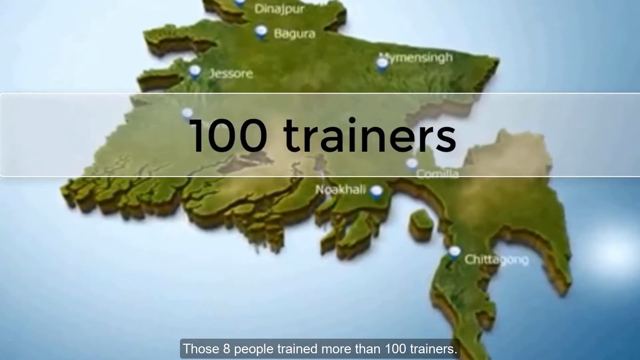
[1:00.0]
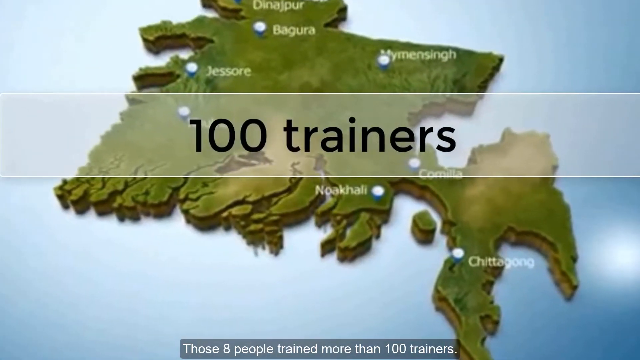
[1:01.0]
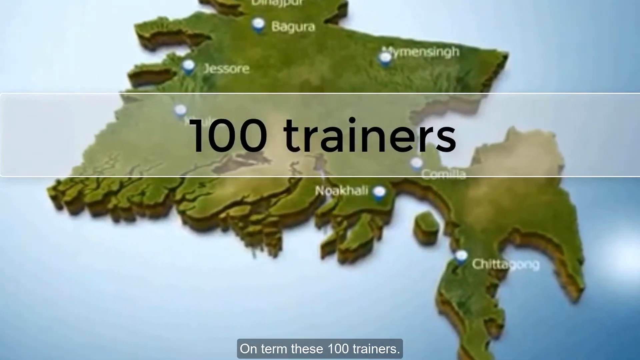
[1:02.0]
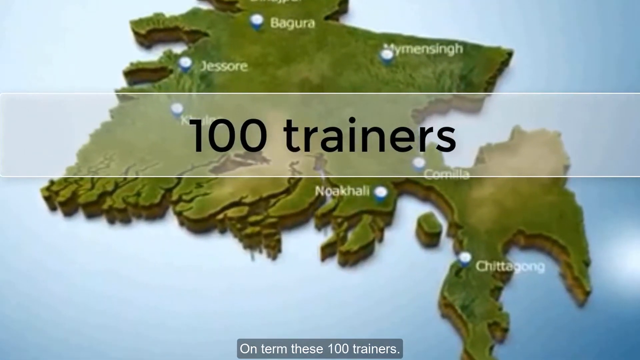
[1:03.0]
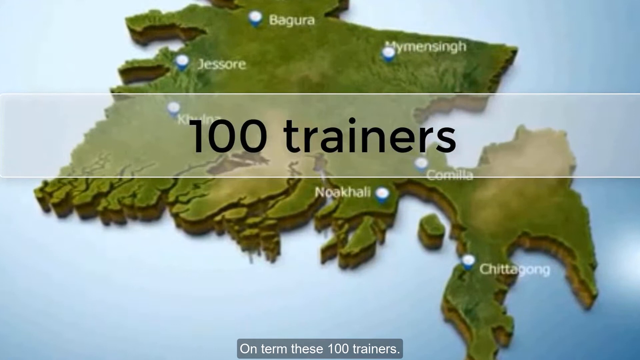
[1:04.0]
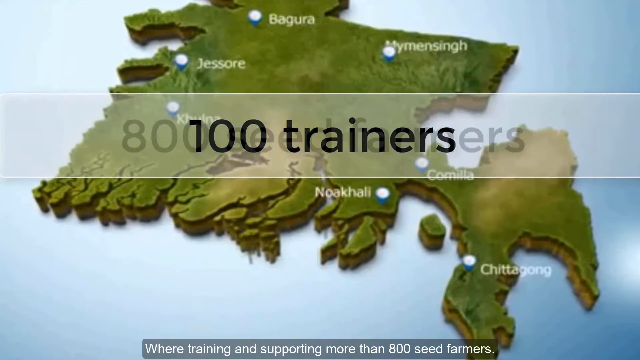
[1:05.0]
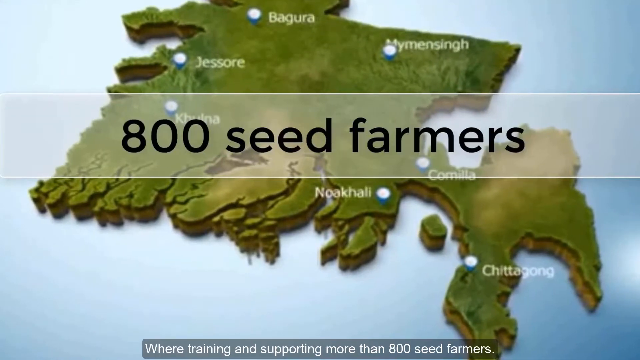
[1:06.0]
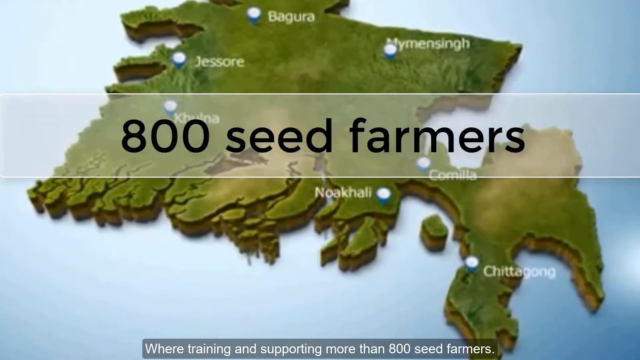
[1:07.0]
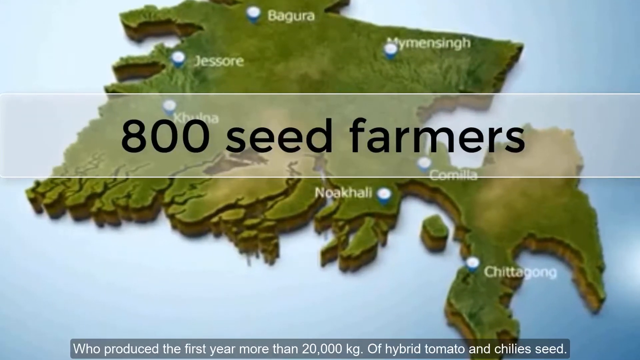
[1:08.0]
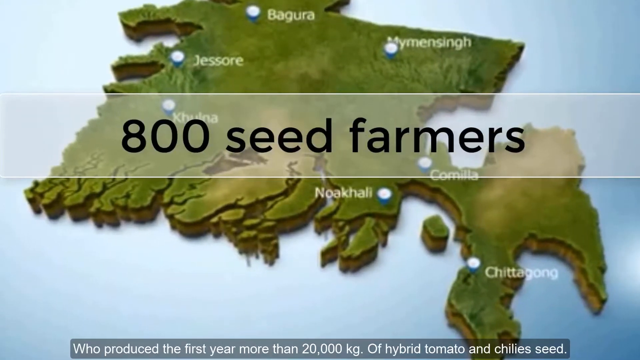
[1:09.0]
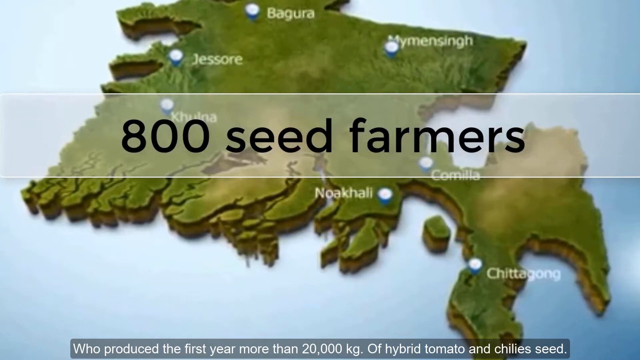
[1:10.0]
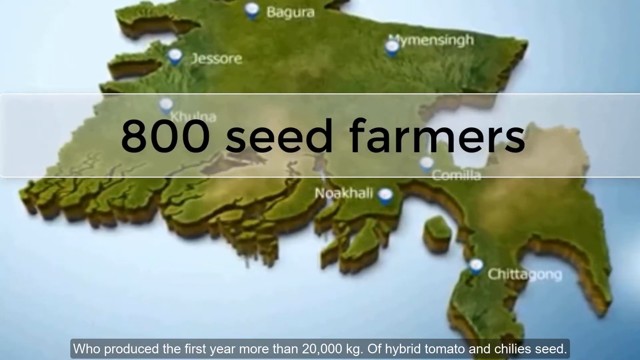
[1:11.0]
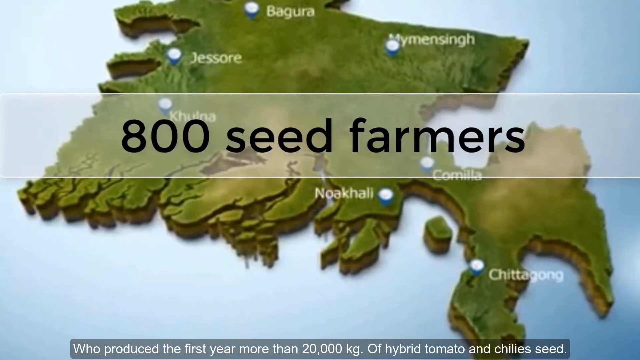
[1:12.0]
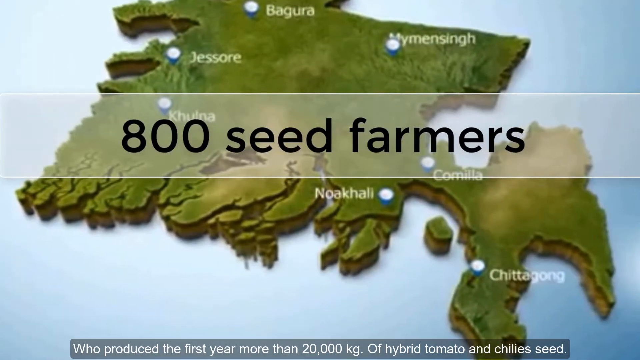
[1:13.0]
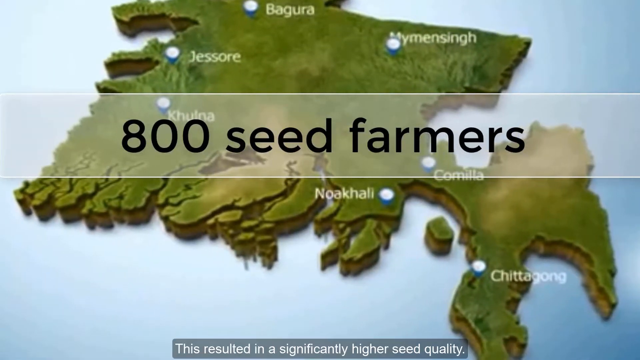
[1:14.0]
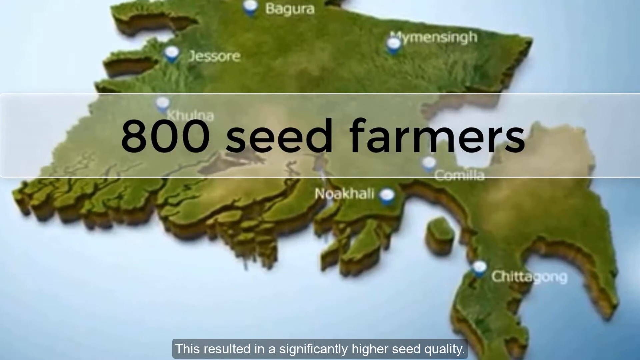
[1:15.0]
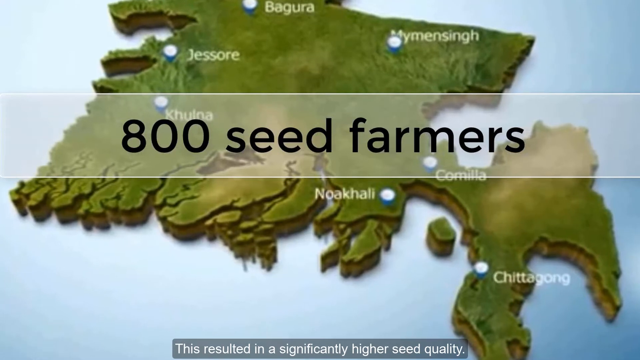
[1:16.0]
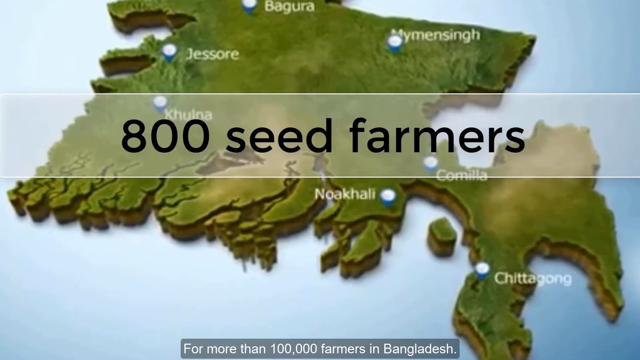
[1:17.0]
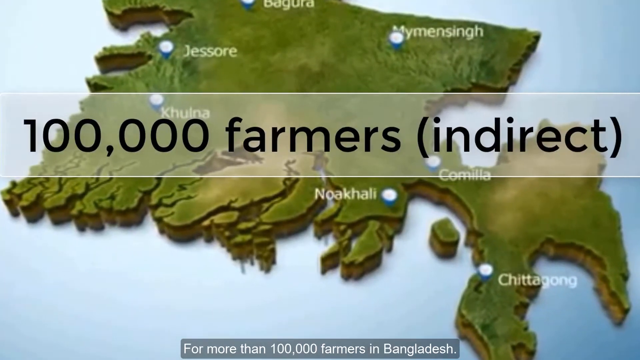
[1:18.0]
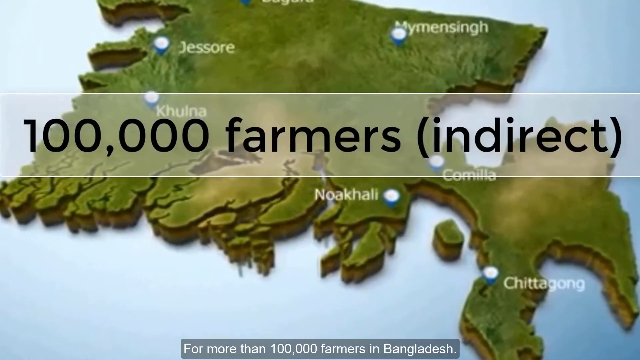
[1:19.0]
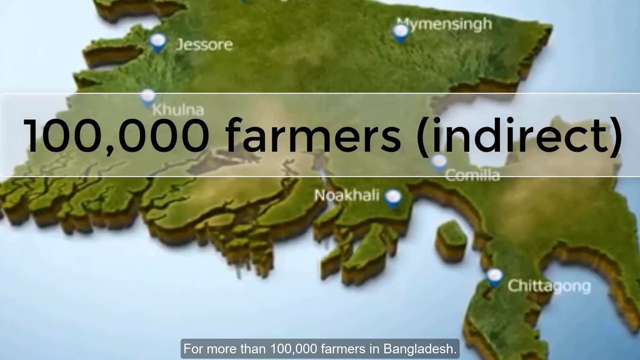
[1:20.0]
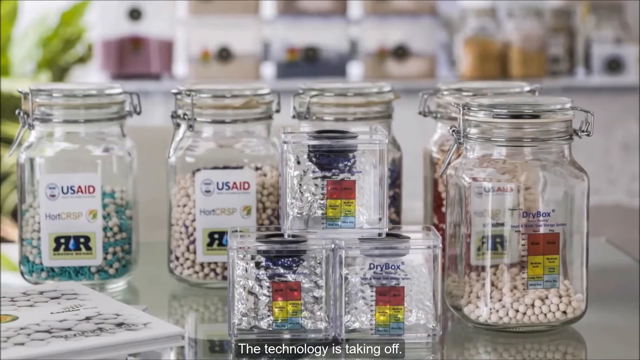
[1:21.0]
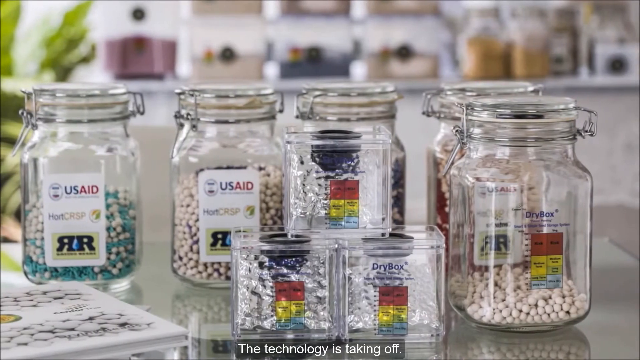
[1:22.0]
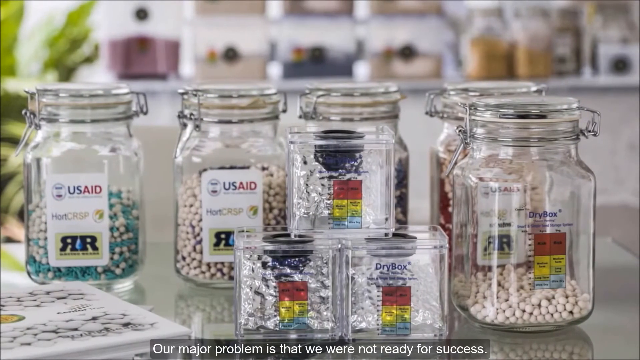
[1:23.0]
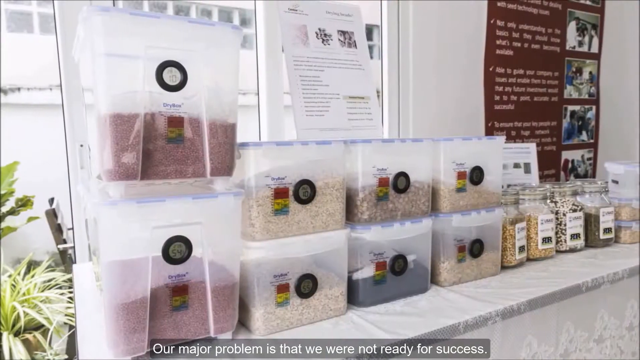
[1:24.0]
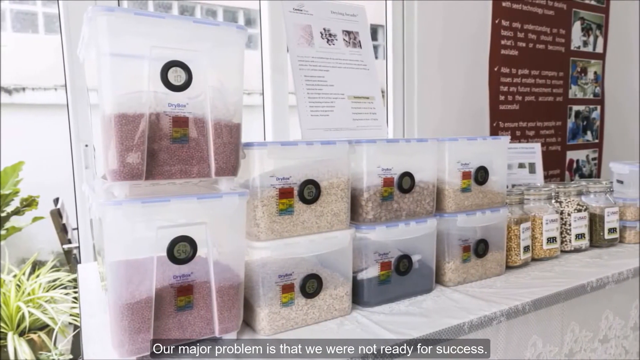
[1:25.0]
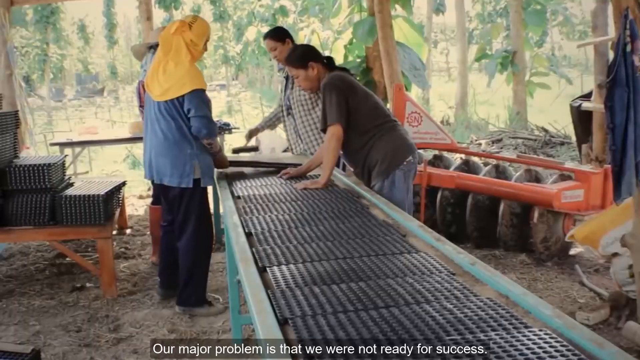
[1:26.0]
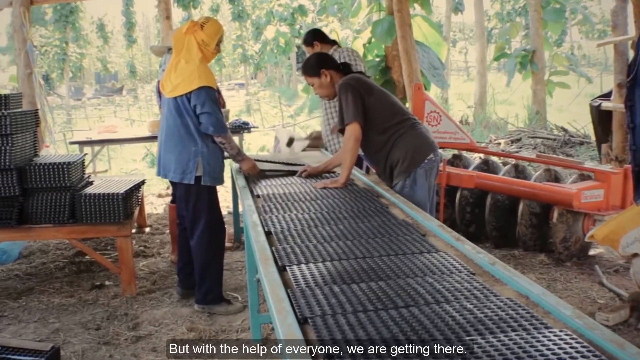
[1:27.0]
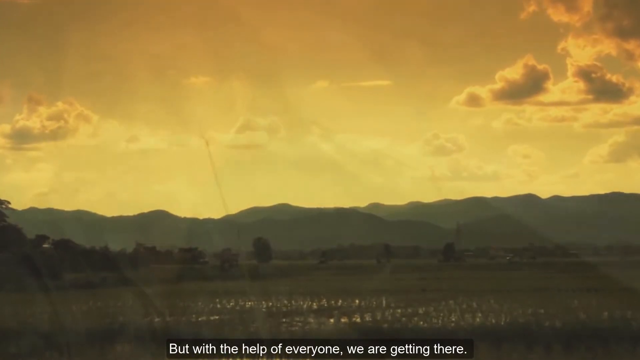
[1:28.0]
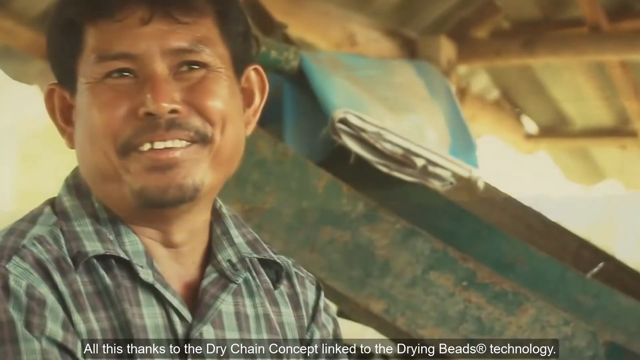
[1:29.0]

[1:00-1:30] The location shown on the map appears to be Bangladesh. Across the front, black text reads "100 trainers" as the camera zooms in slowly on the still photo, then "800 seed farmers" as the slow zoom continues. There is white captioning at the very bottom in English, but it is too small to read. The black text then reads "100,000 farmers (indirect)", still against what looks like part or maybe all of Bangladesh. Closer in, the cities are visible, one of them Jessore. A still photo shows glass jars that look almost like mason jars, labeled USAID on the outside, with some kind of pills or medications inside. A short outdoor video shows people working, followed by quick cuts between many different videos: a man who looks like he is talking for an interview, and outdoor shots of sort of old-school rural farmers with poles across their backs carrying their loads.